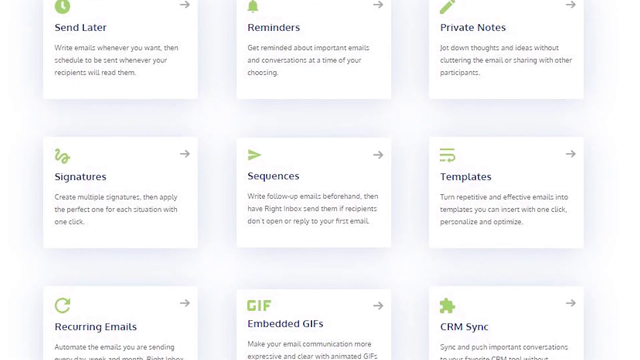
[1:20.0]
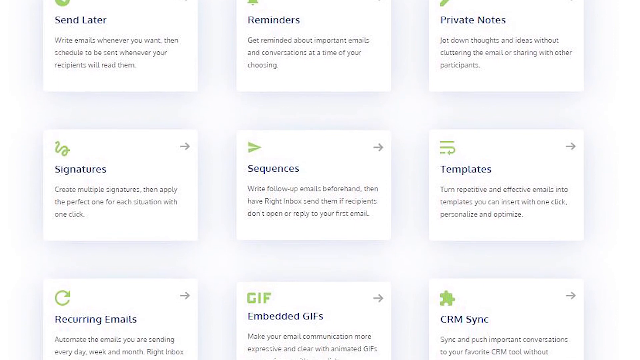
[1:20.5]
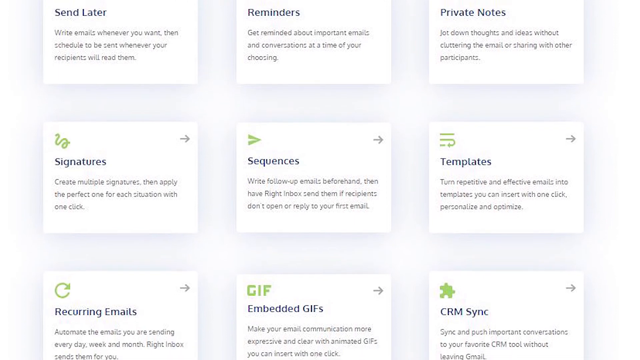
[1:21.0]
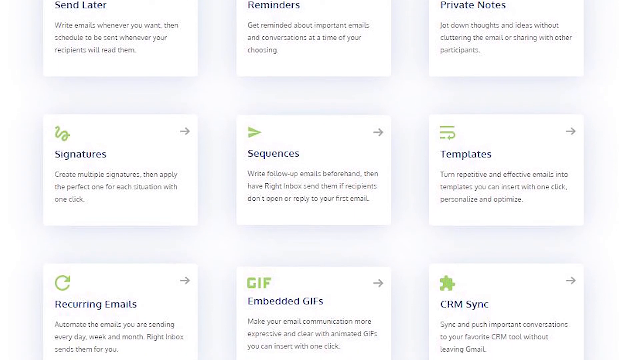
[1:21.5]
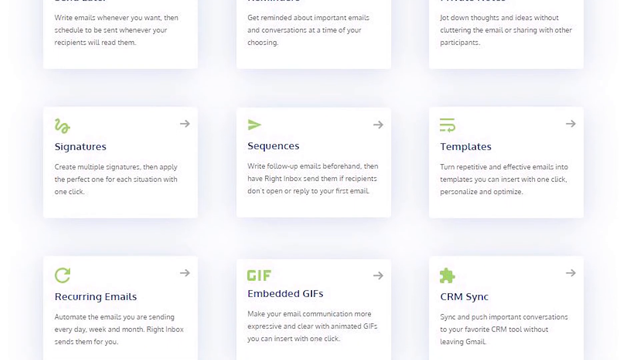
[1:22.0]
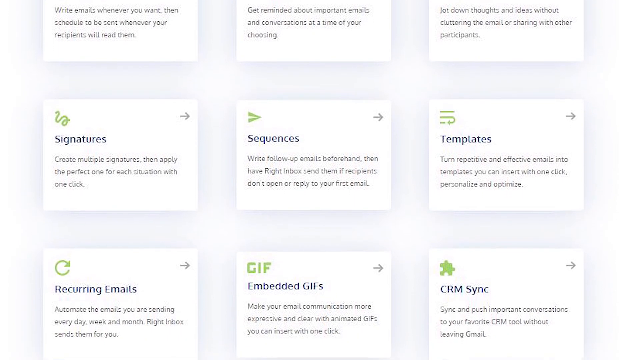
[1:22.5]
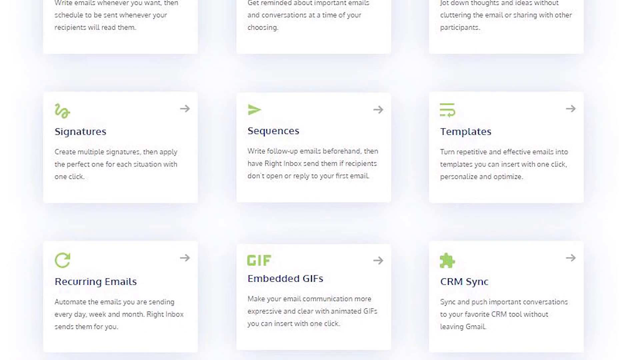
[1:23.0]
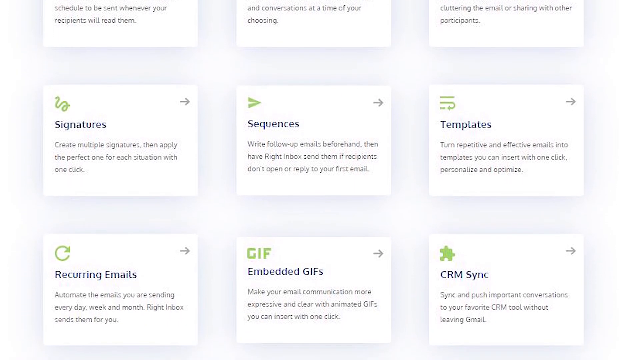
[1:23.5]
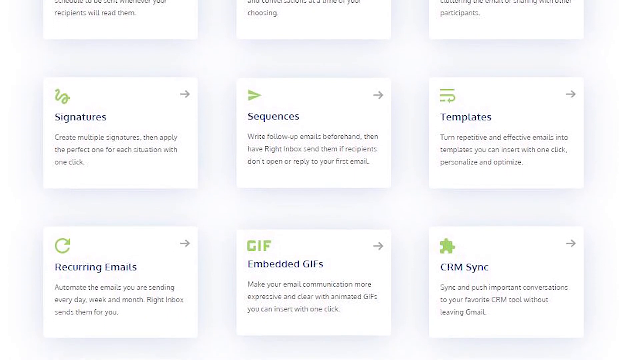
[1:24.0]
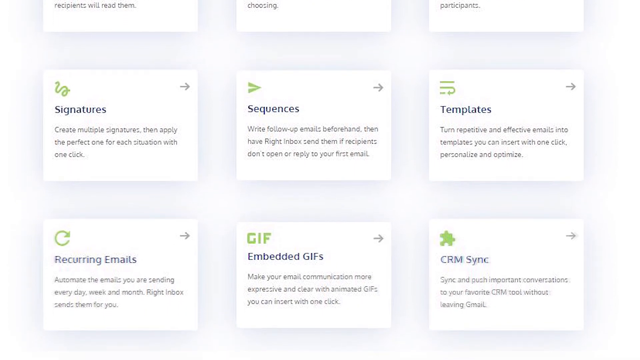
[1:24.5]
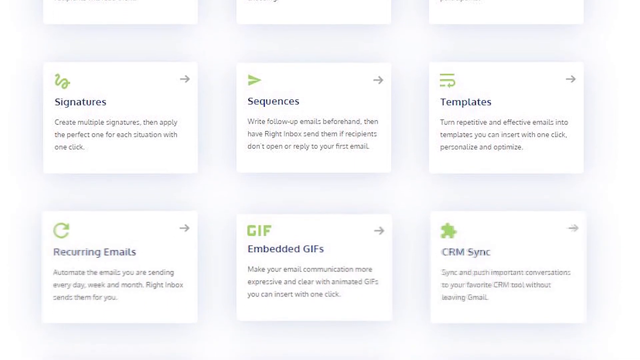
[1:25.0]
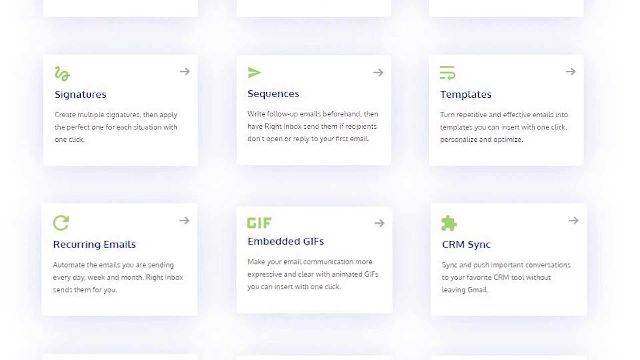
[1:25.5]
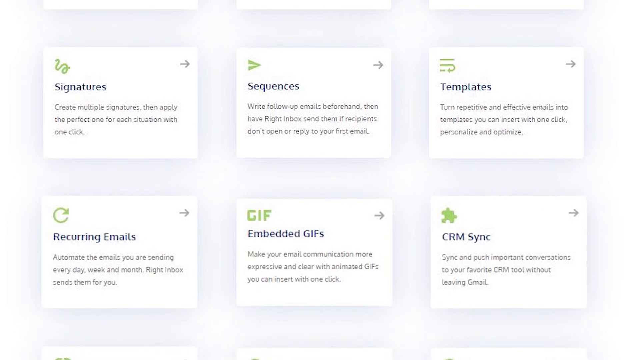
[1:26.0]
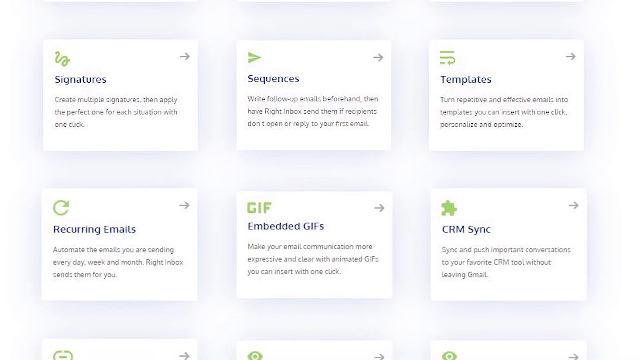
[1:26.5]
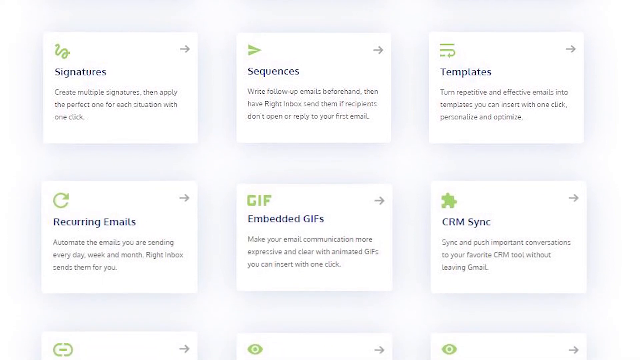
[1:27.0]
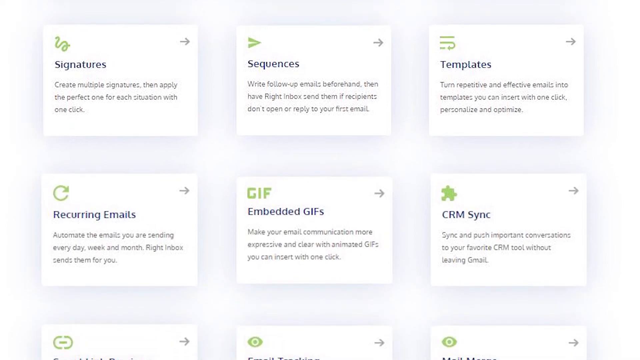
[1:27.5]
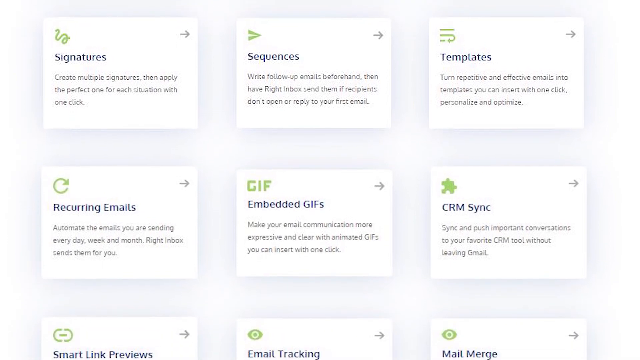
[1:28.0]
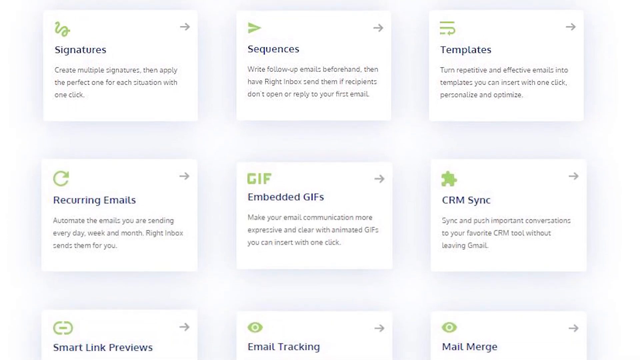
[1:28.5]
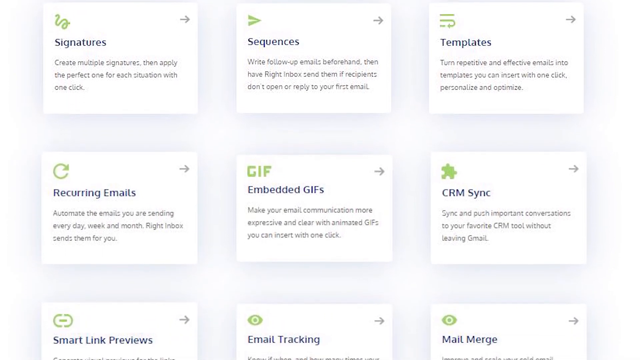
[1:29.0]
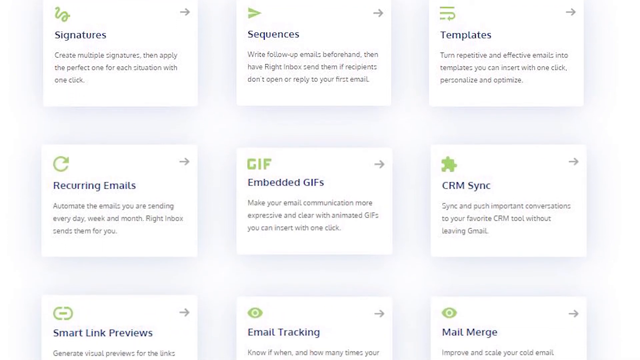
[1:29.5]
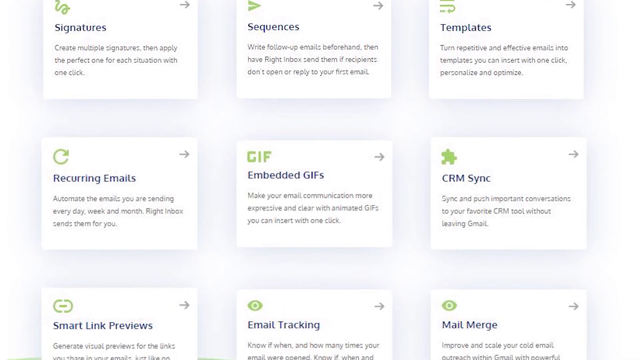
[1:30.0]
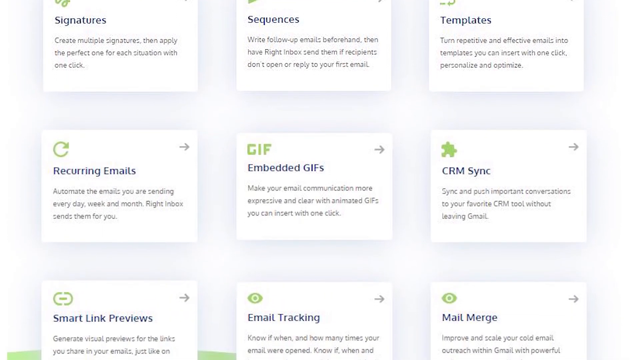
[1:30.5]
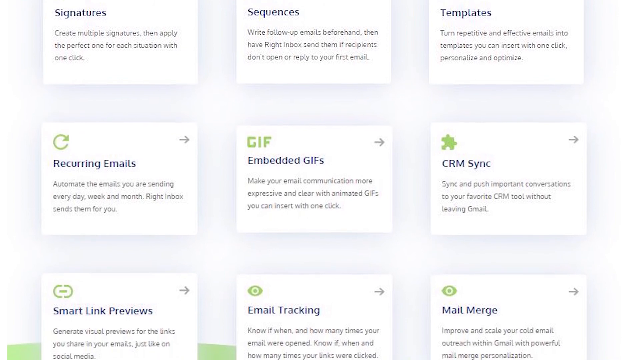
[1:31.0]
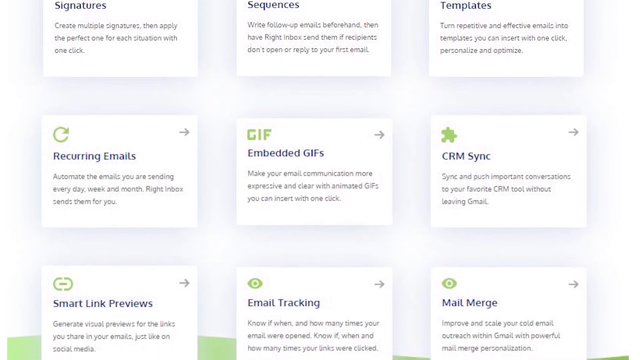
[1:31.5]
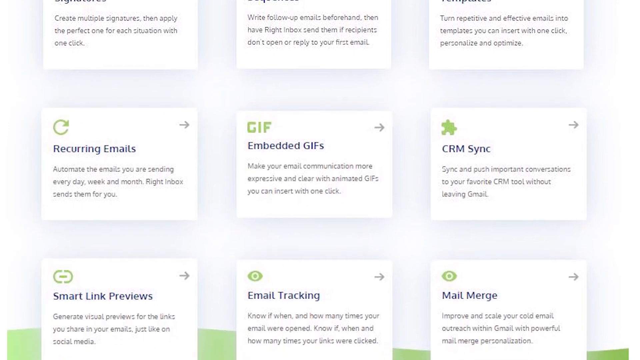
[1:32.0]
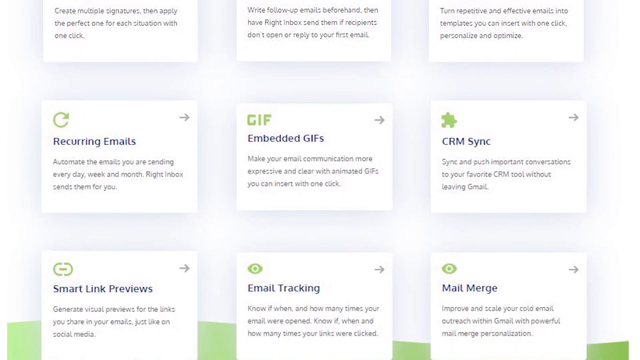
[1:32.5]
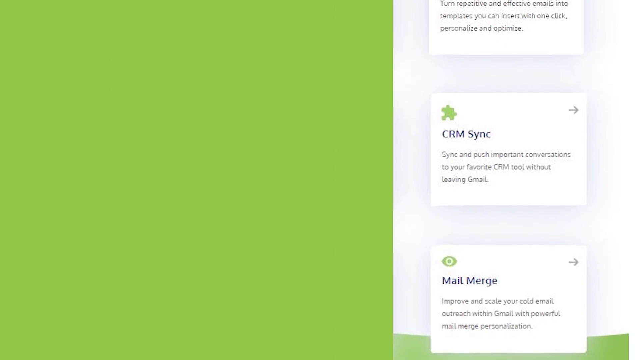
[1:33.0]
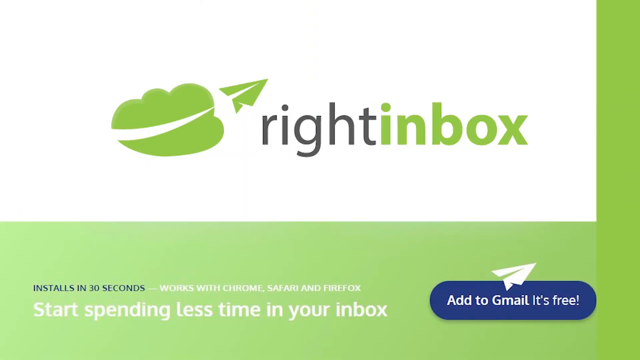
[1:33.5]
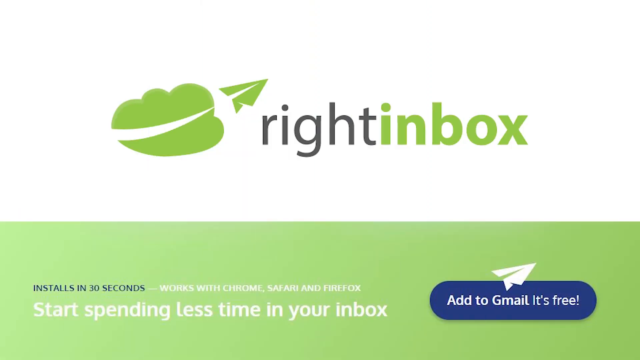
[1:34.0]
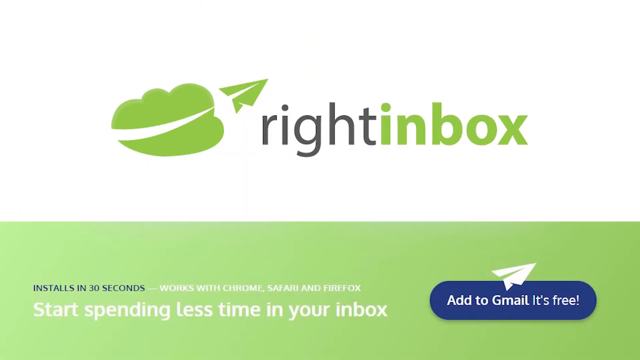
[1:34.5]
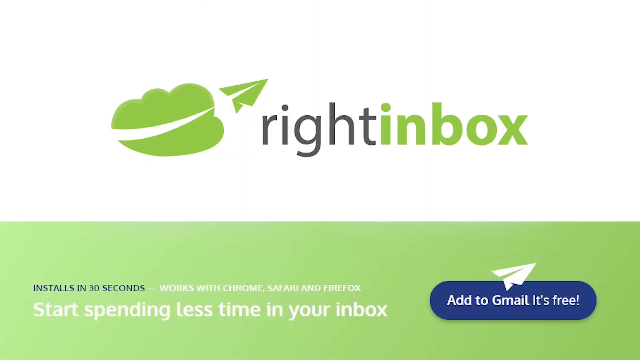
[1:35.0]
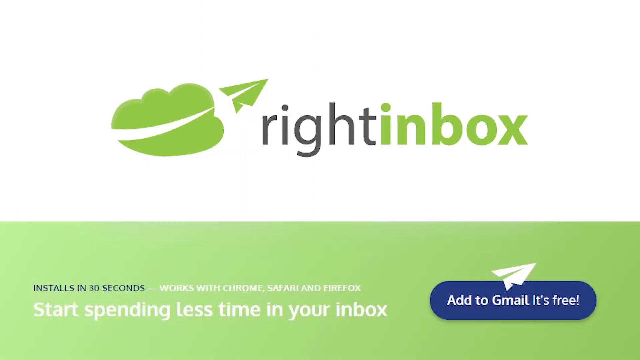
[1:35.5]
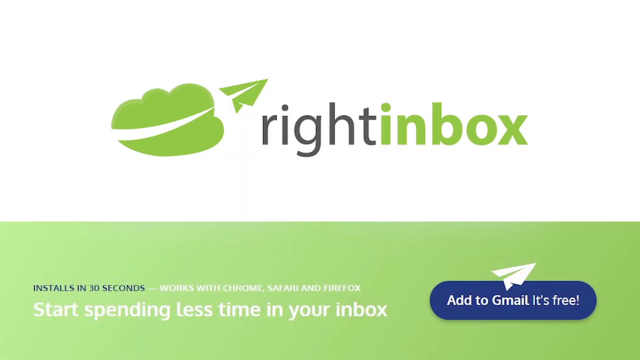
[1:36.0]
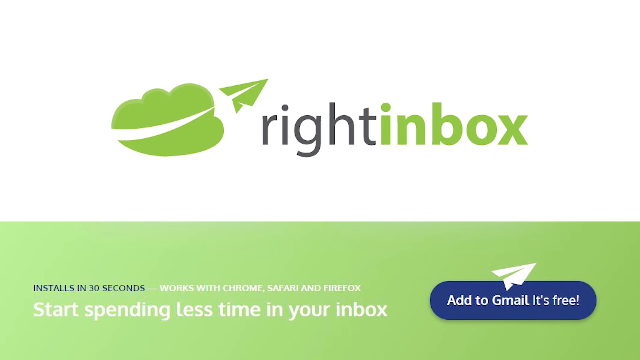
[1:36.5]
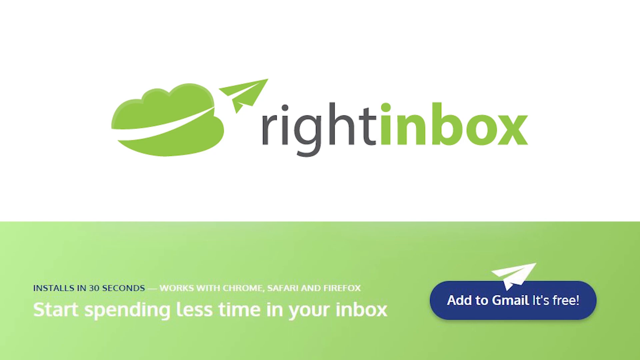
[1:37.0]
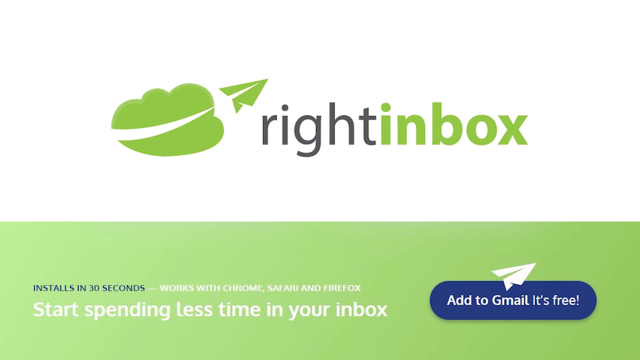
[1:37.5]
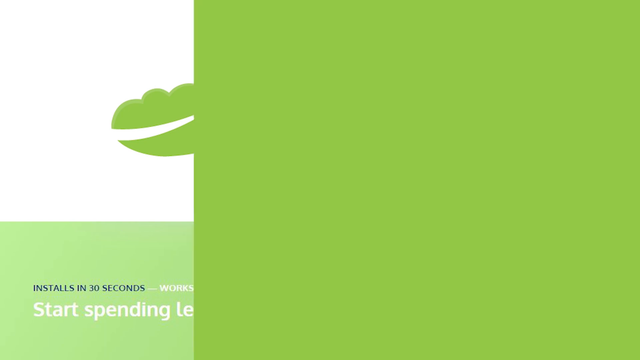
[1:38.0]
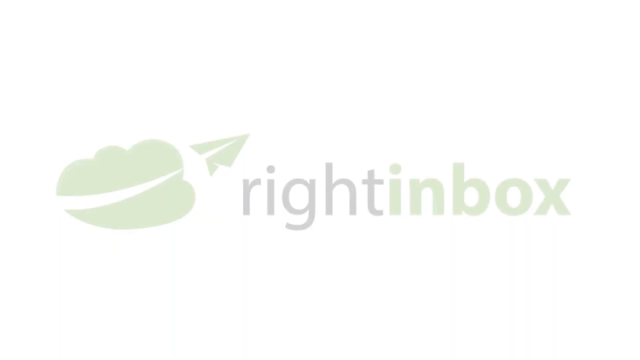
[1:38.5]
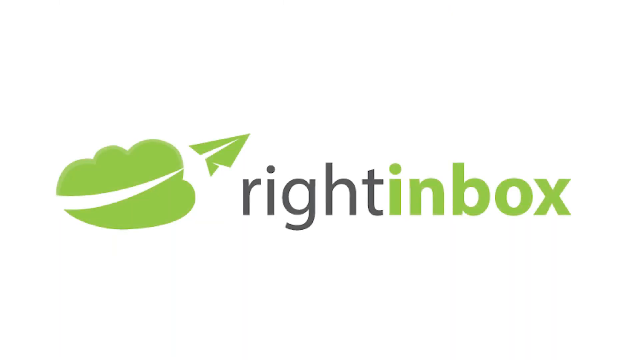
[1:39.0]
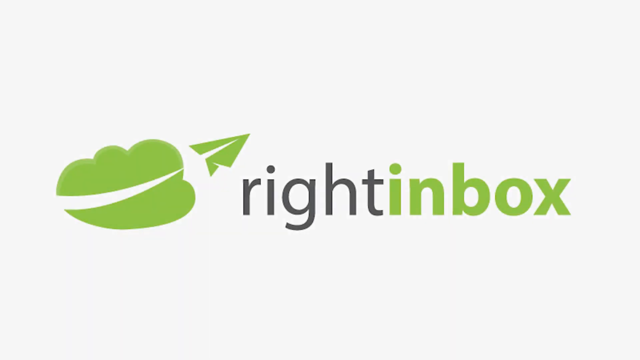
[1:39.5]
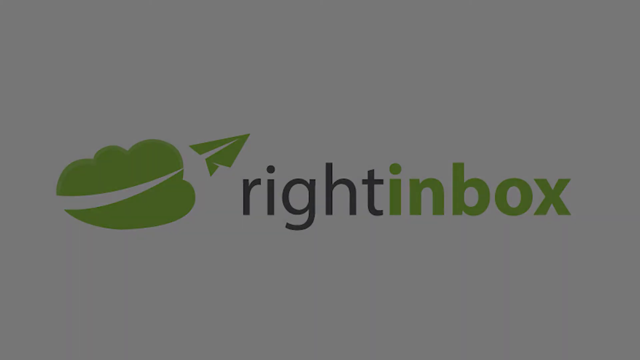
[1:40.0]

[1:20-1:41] The view continues panning down through the options, which are displayed in a square format so each option can be seen. Scrolling further reveals more options at the bottom, such as smart little previews, email tracking and mail merge, along with a description of each. A smooth green transition then sweeps across the screen, turning it into a screen showing Right Inbox with a cloud logo and a green paper airplane going through the logo. Behind the text and logo is a white background, and at the bottom a green bar shows some information about the application and a button for adding it to Gmail. The green transition then sweeps over the screen to the left, and the screen turns white with just the Right Inbox logo, a green cloud with the paper airplane going through it, in front of the white background, until it fades to black.